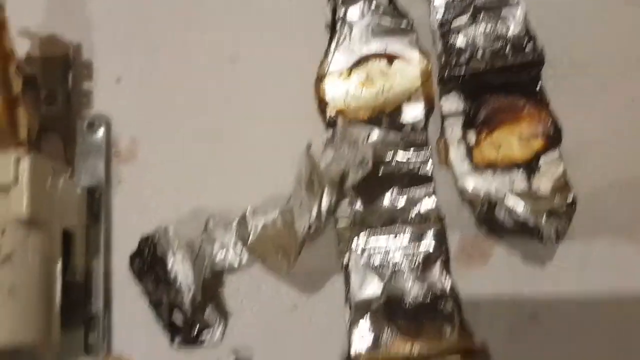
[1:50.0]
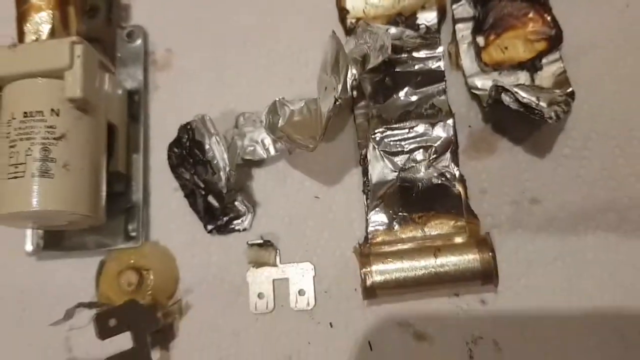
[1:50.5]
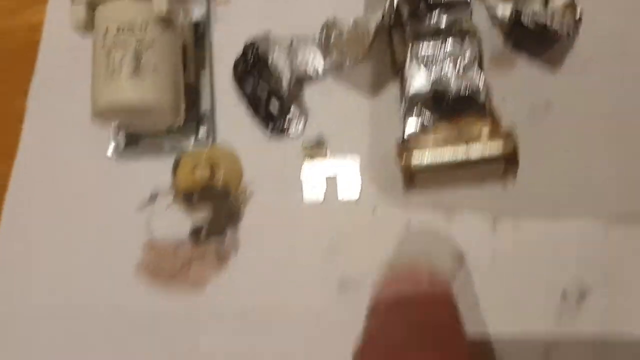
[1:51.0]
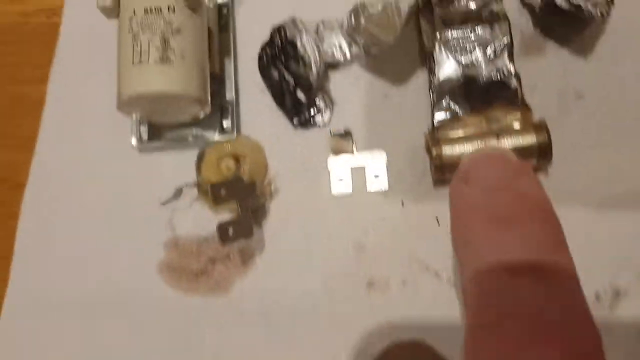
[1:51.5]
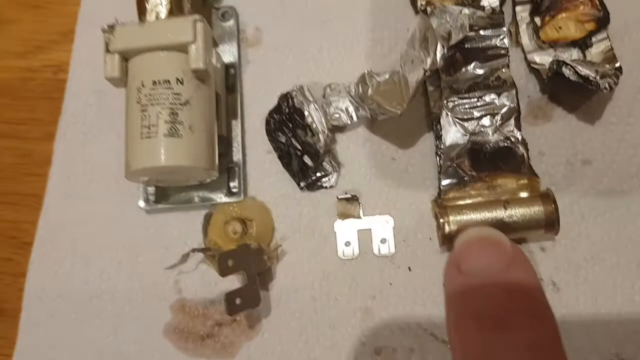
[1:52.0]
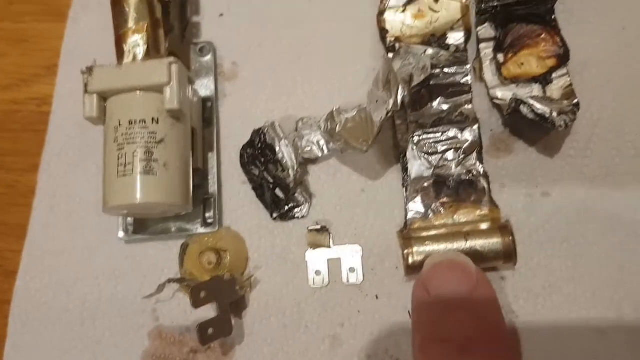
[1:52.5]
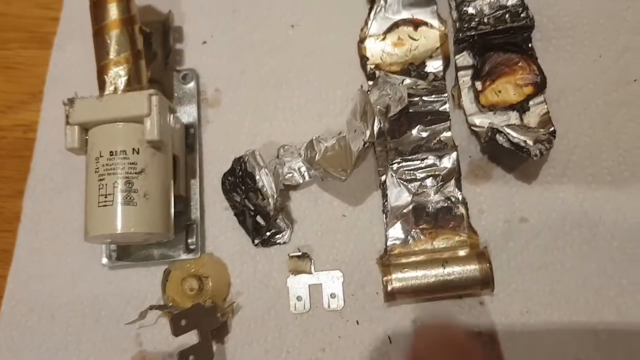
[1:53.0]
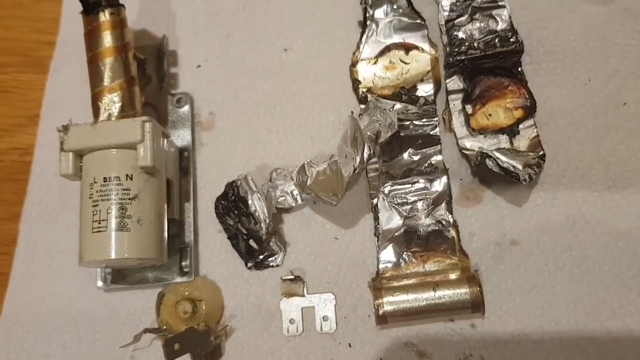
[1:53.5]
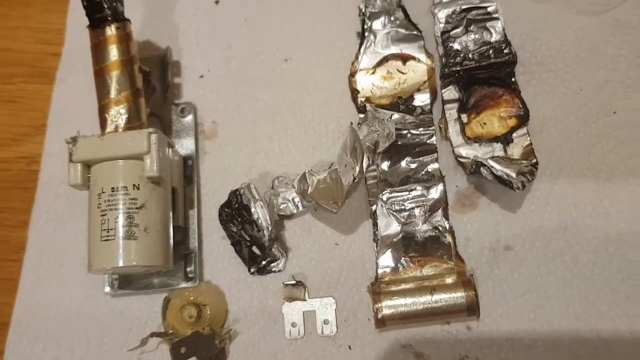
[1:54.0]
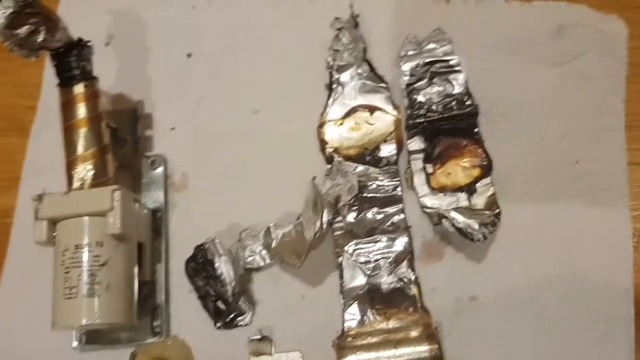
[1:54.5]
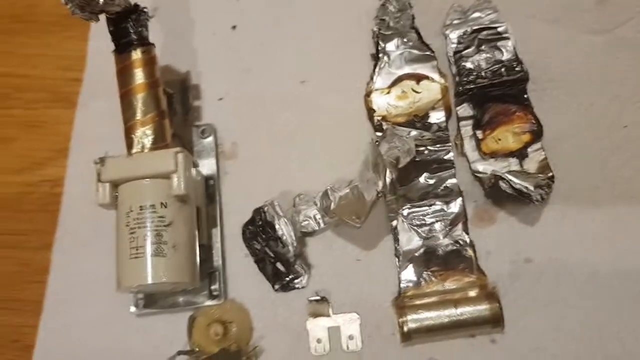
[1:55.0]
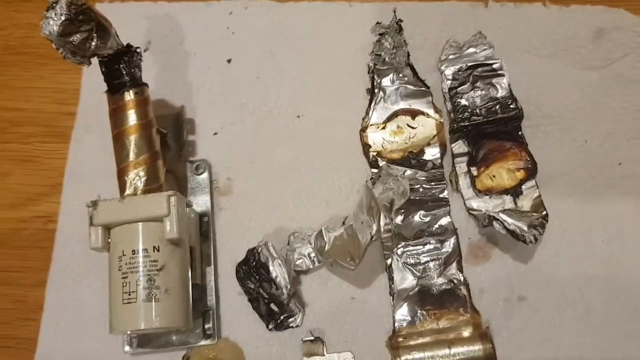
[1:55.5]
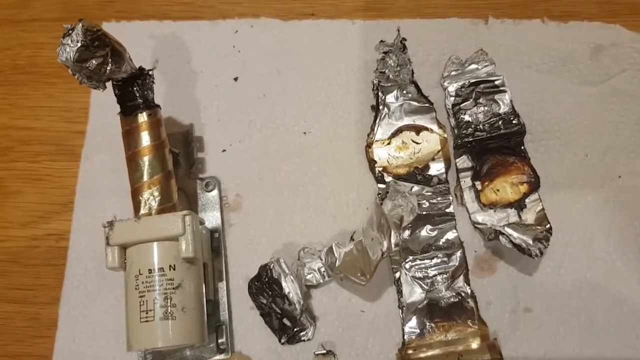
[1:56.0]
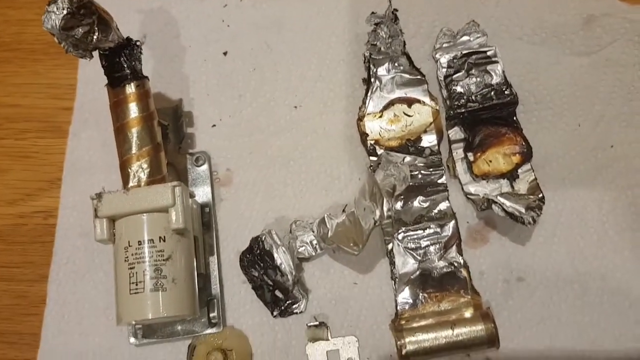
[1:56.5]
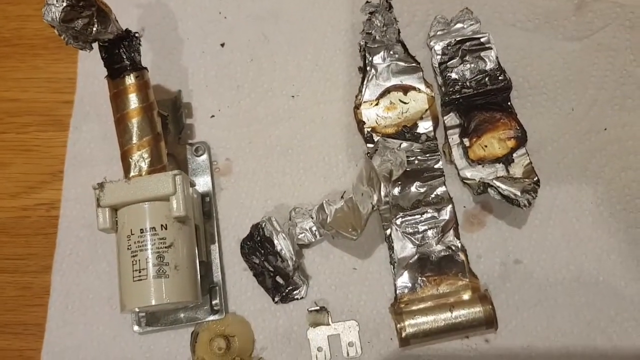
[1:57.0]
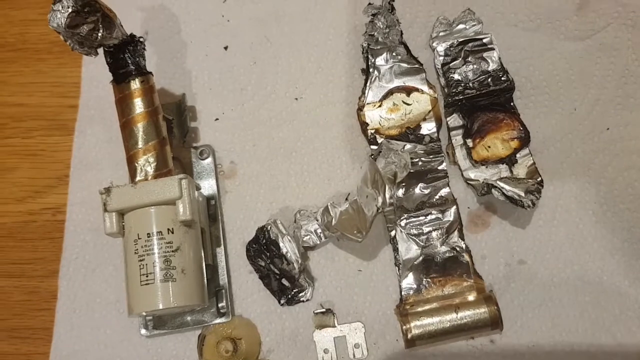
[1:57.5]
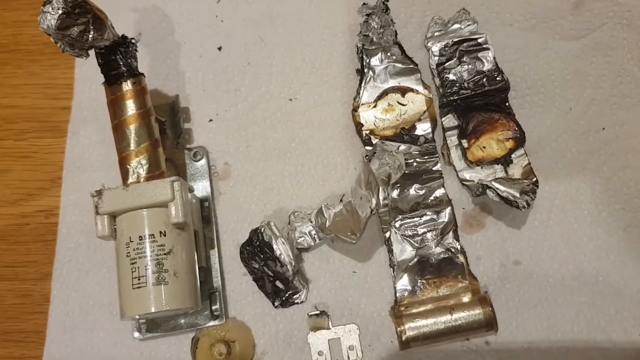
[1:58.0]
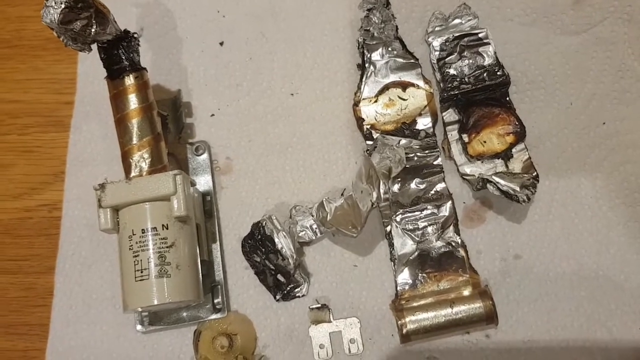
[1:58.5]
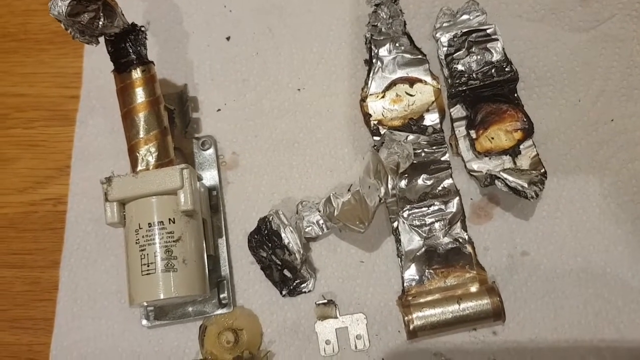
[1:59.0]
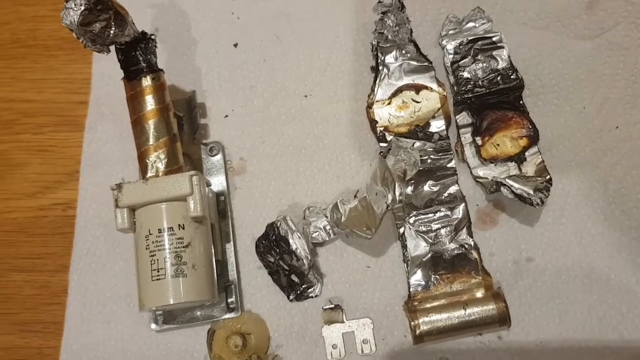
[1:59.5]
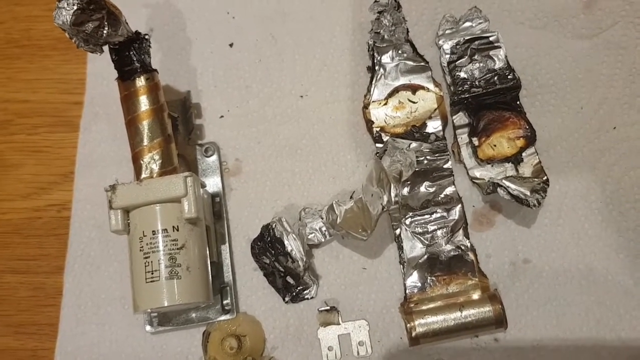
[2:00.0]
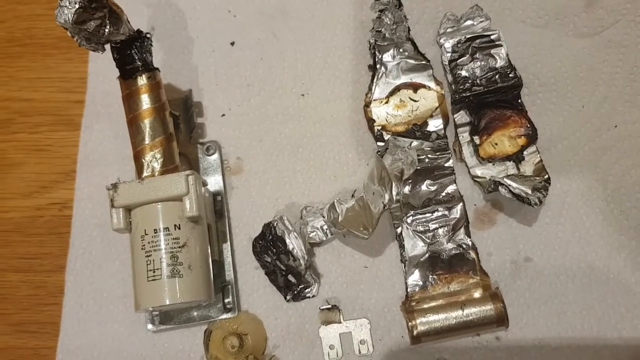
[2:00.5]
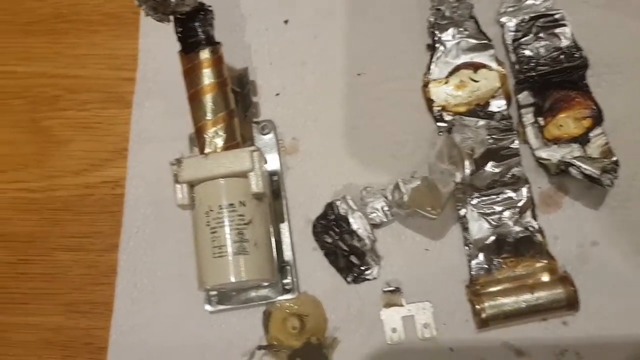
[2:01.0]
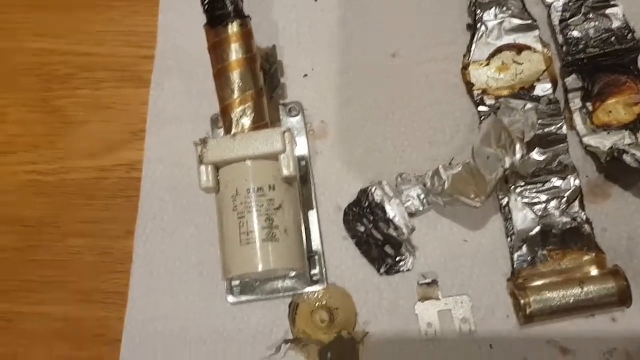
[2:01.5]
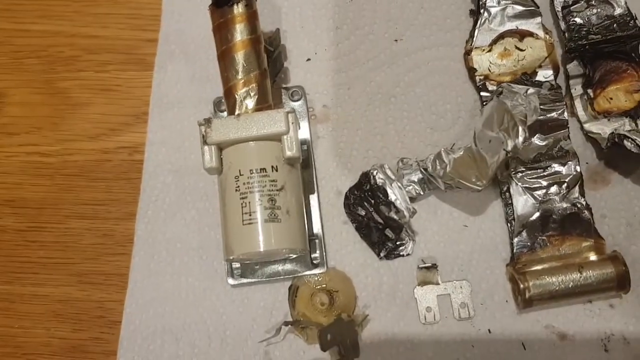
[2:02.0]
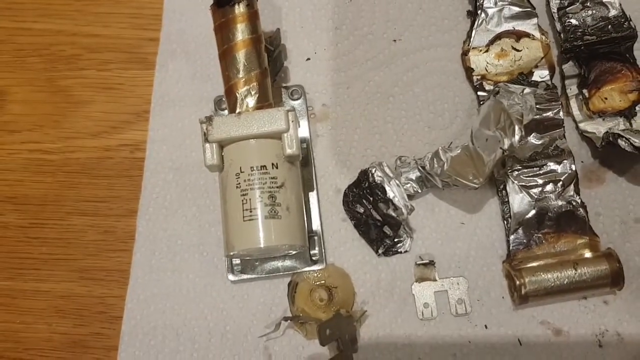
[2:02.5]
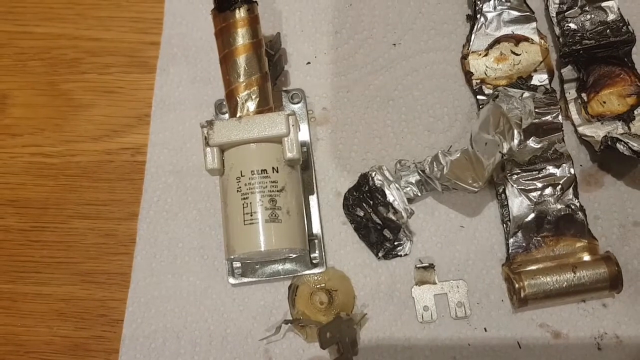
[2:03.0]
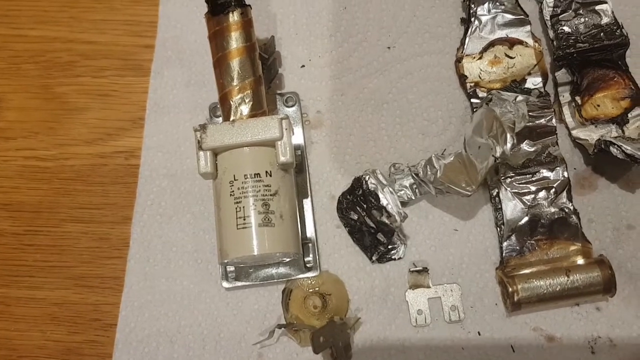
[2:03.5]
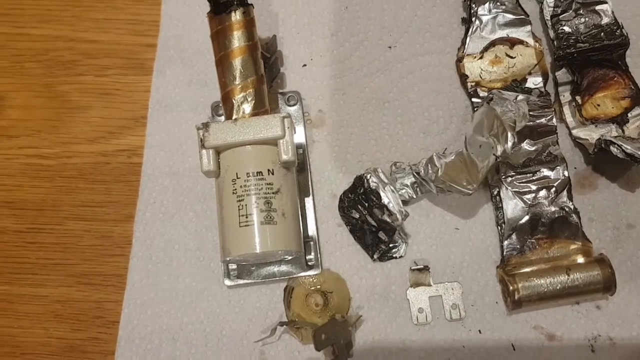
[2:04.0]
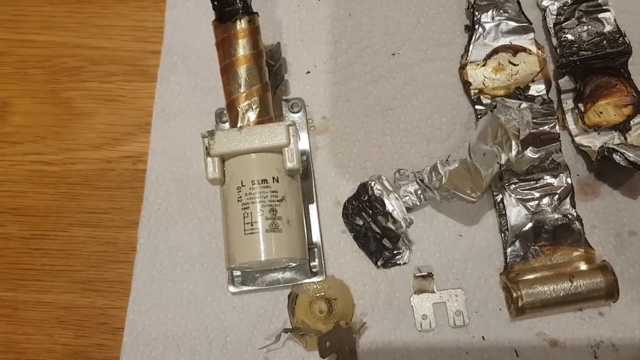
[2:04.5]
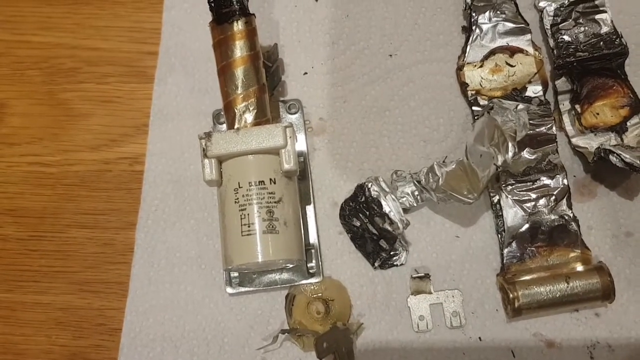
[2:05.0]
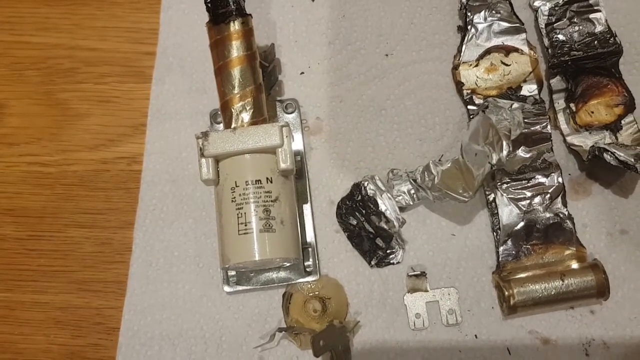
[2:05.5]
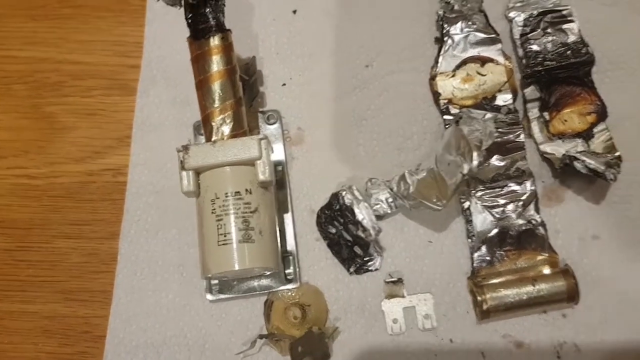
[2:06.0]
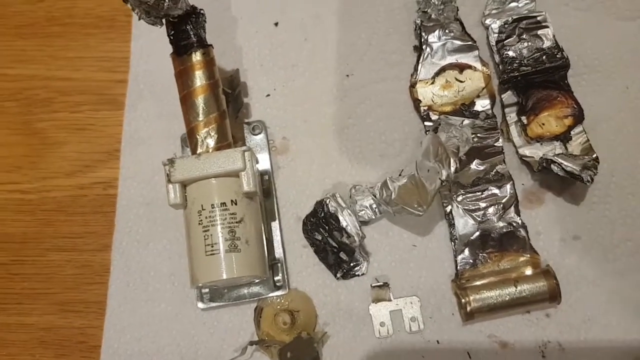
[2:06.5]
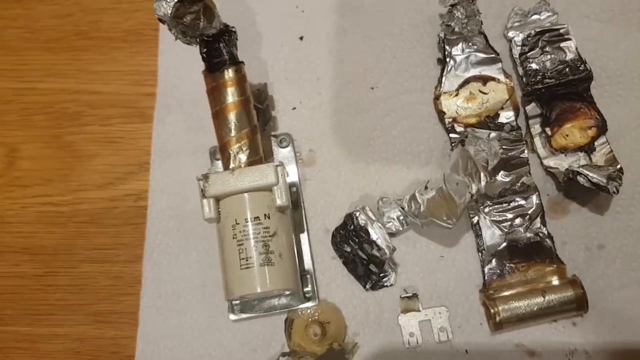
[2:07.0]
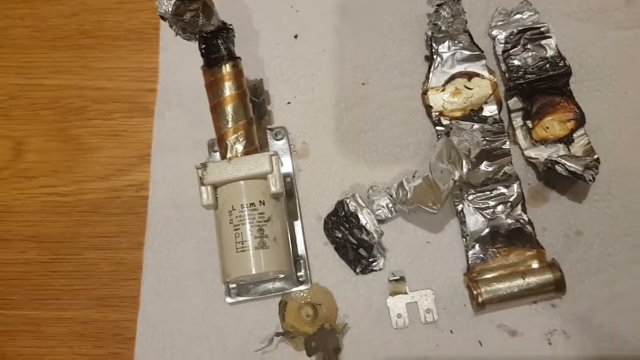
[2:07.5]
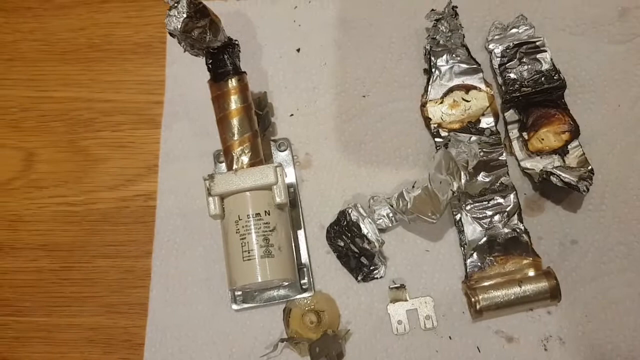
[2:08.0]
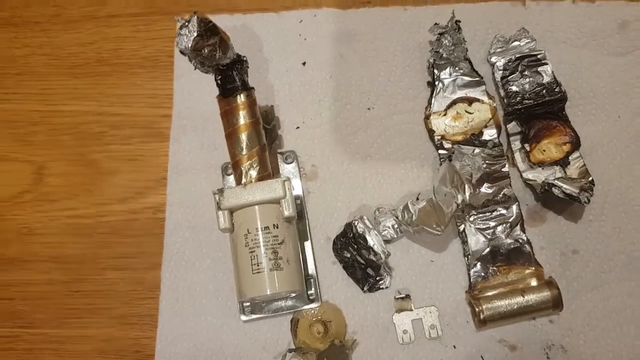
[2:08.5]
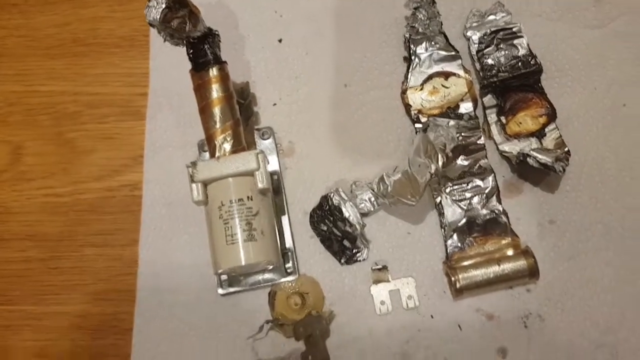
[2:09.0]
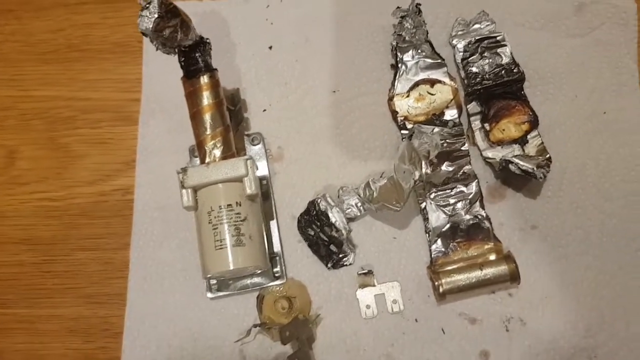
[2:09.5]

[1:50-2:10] The camera is zoomed in on the two foil pieces and pans down to show the bottom of one of them, where the person places a finger. The camera zooms out a bit and moves over to the cylinder piece, where some text is now visible: an "L" in the top left and an "N" in the top right; the rest is hard to make out. The camera focuses on that for a while, then moves back to the center of the paper where all the components are laid out. The camera bobs forward and back a little.